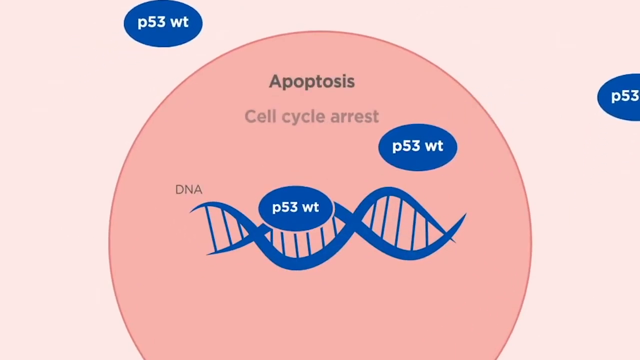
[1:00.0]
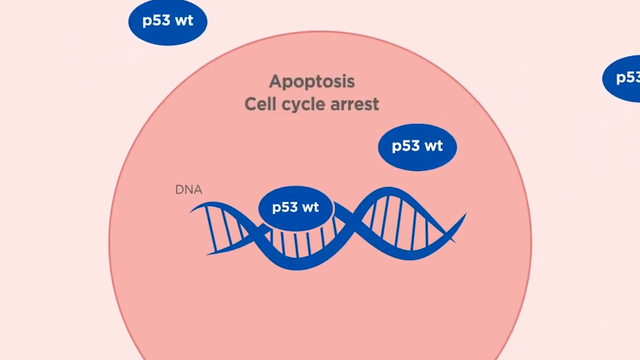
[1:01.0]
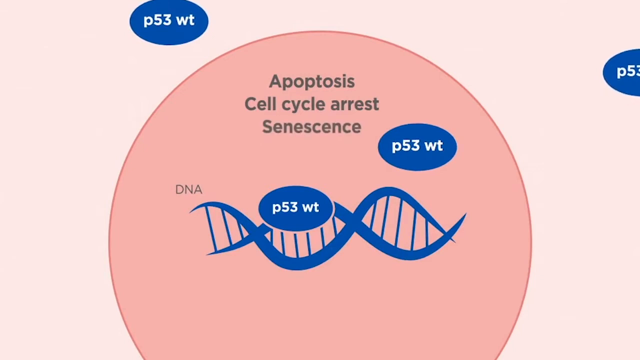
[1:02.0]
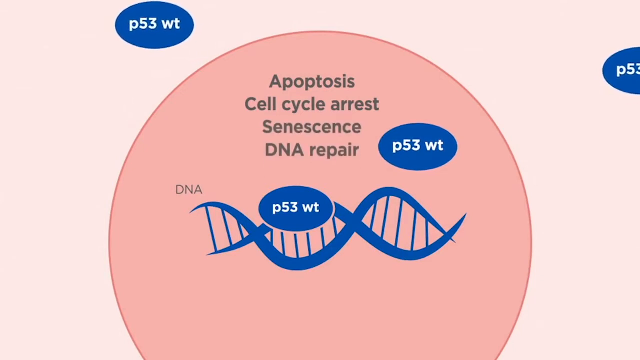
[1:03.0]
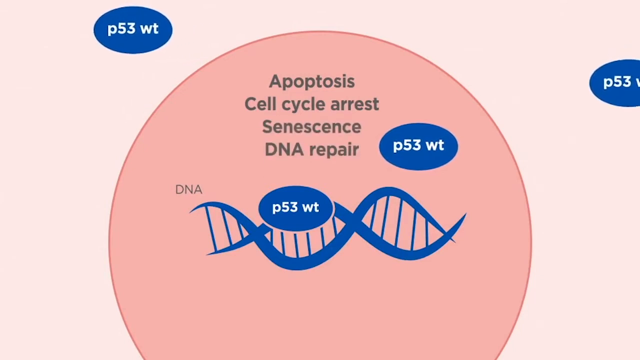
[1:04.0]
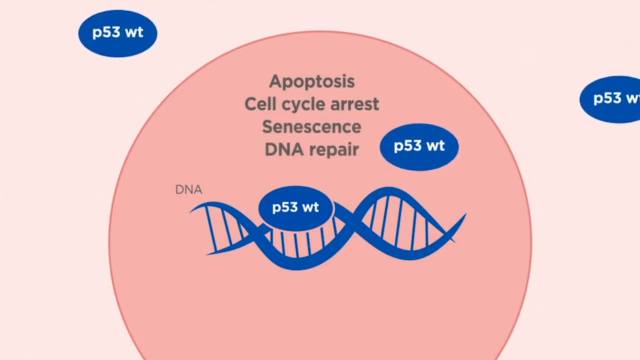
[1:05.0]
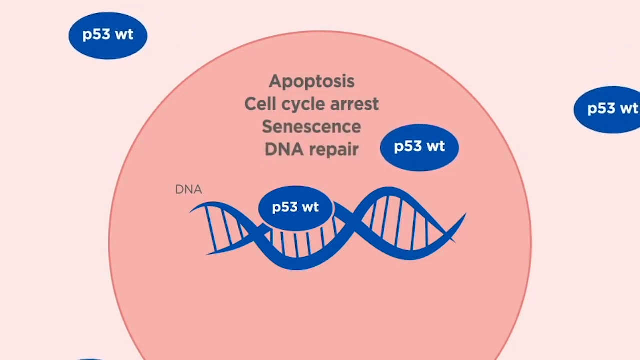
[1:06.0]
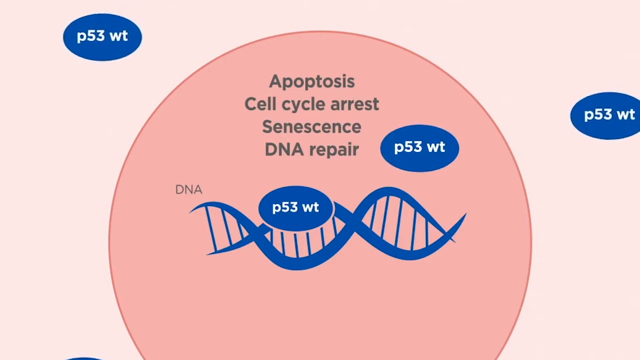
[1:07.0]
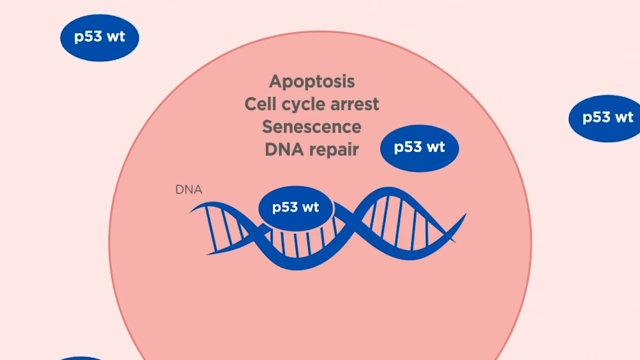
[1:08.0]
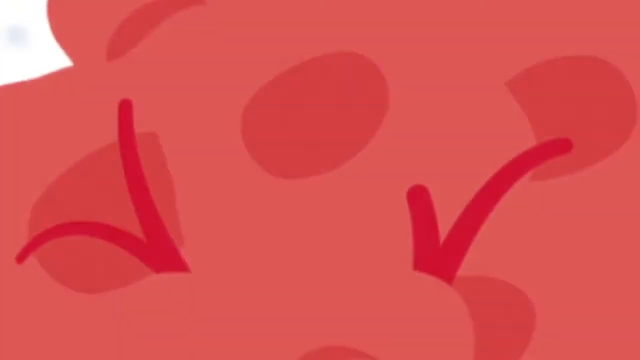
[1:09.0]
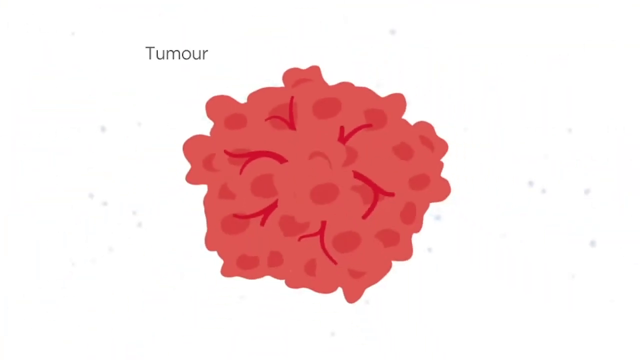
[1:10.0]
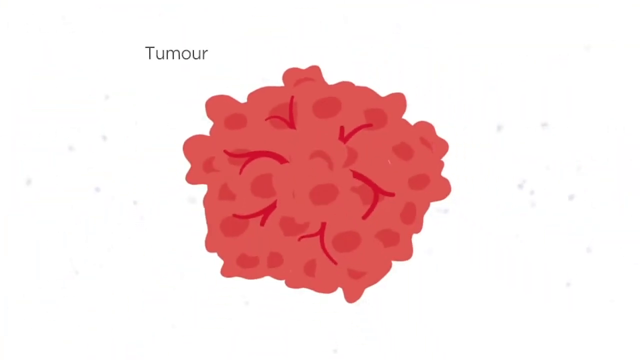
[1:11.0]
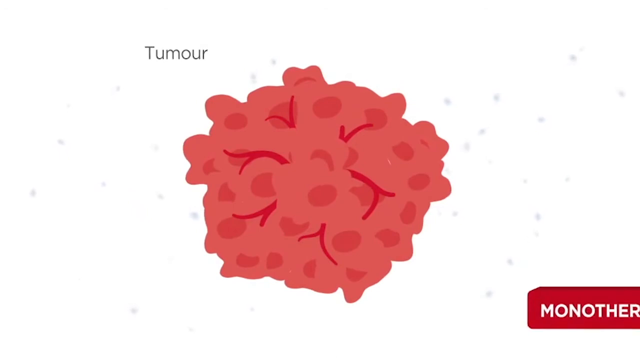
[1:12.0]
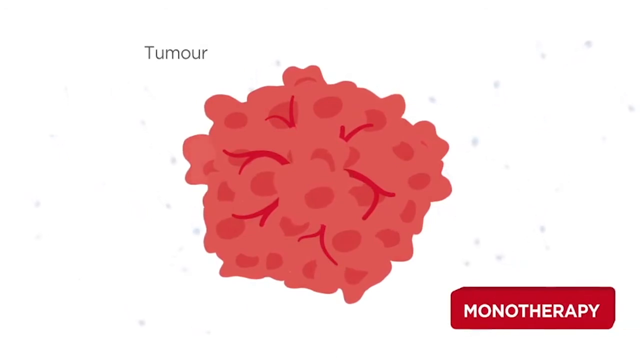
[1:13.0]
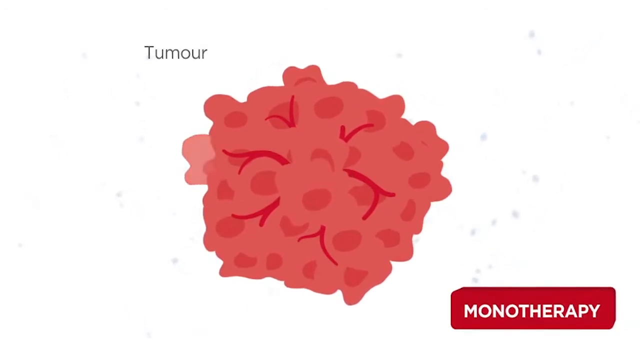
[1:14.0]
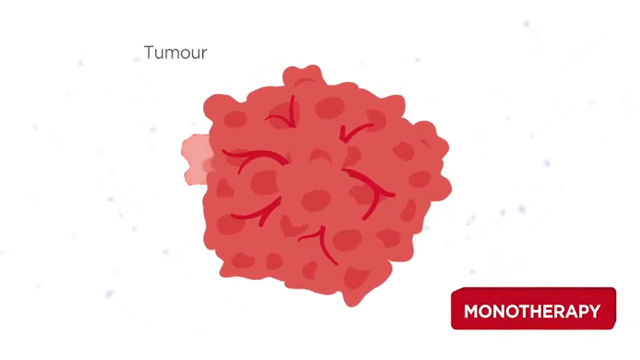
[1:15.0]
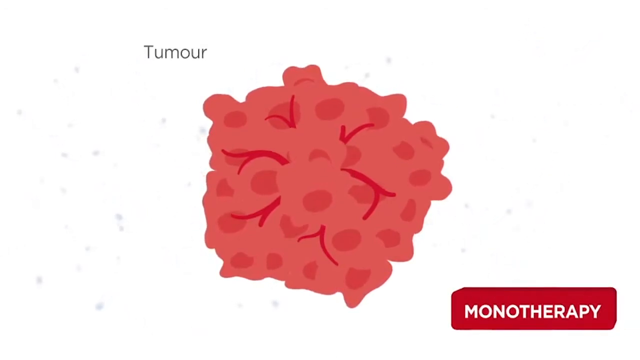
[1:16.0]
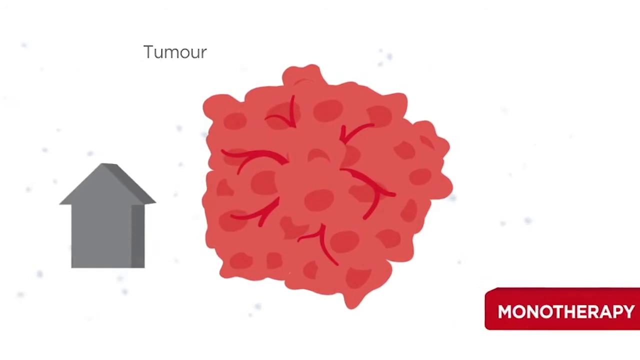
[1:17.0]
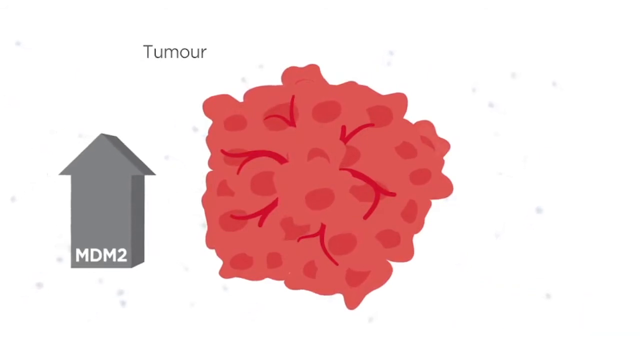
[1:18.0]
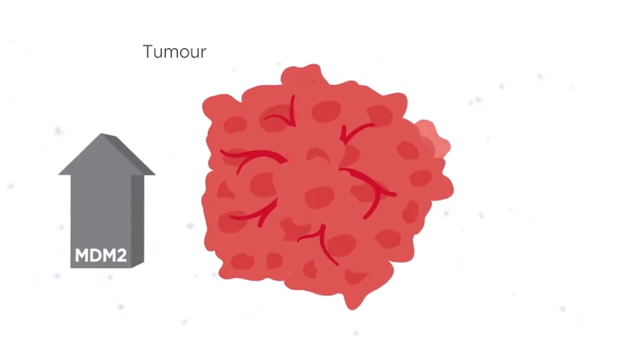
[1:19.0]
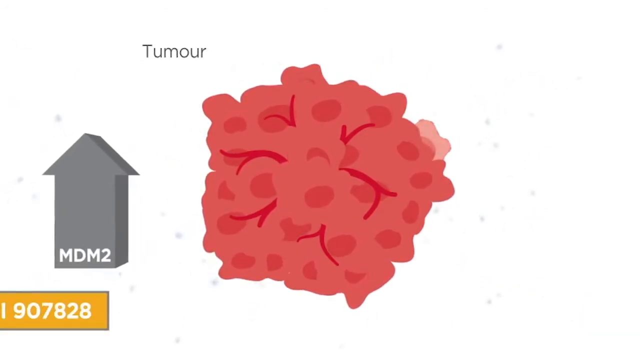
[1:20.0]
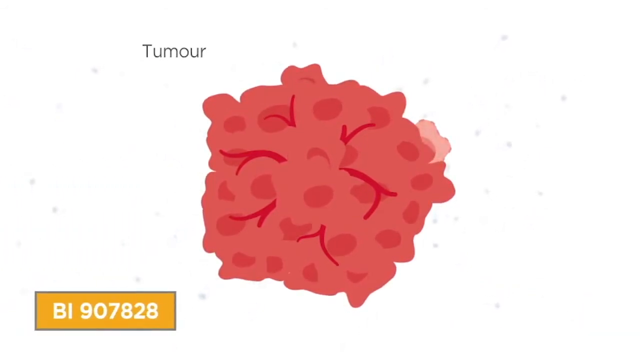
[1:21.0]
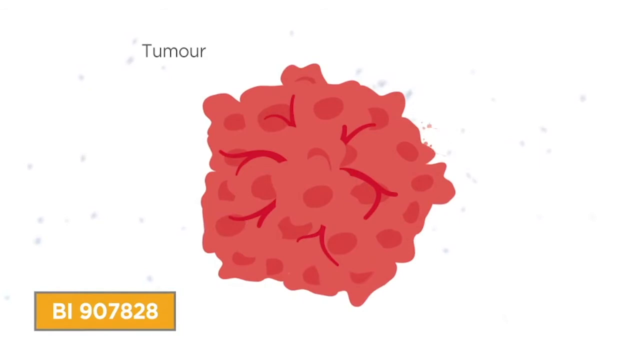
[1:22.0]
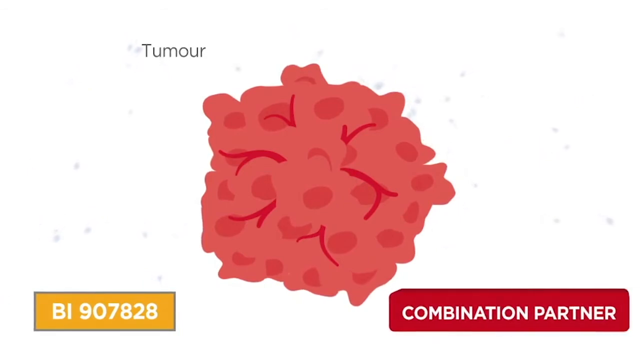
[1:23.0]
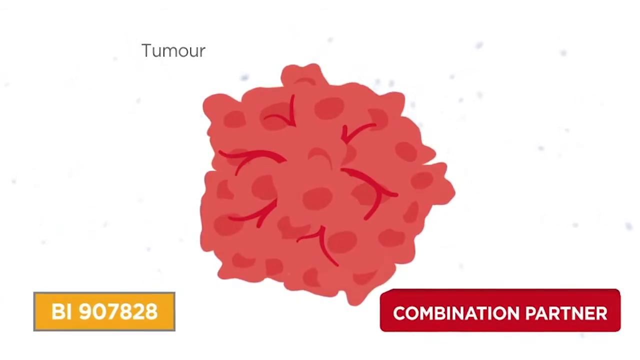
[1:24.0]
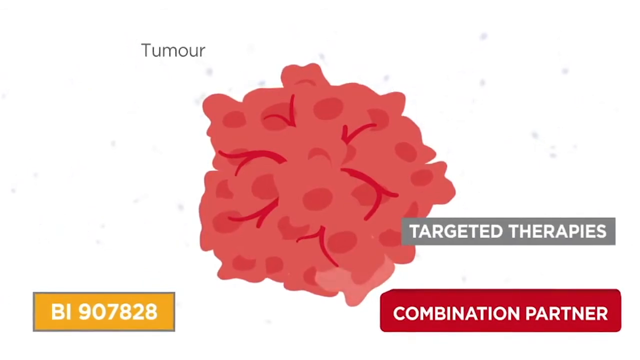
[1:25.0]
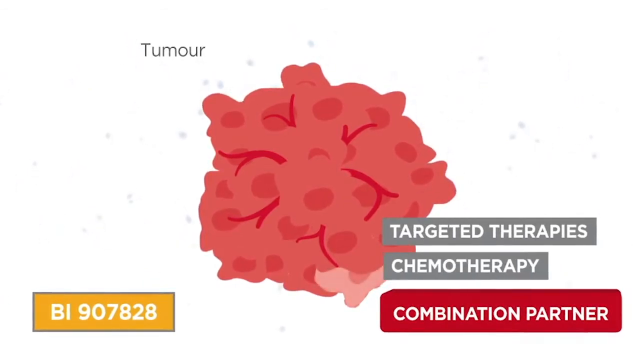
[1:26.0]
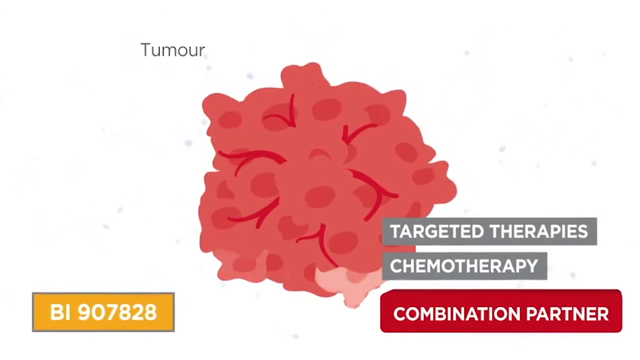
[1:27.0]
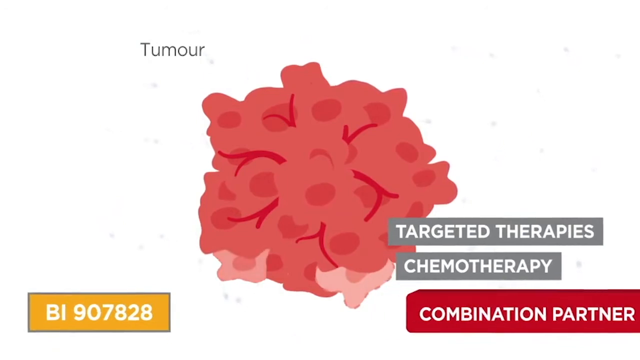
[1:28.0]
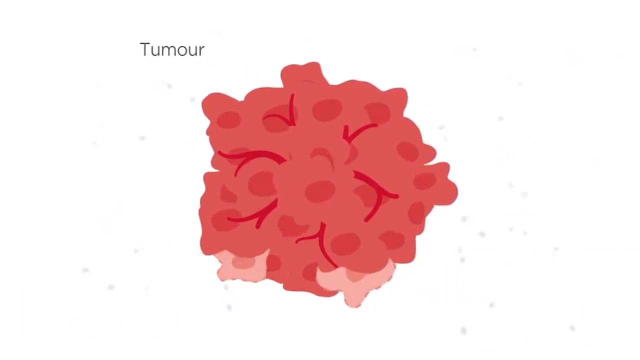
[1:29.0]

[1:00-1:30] A cell diagram shows the text "apoptosis cell cycle arrest" along with "DNA repair". A large cell appears with smaller blue cells going around it. The word "monotherapy" is on the screen. A picture of the cancerous tumor has a labeled arrow, and there is a labeled orange box, apparently as a combination partner, along with two gray rectangles that go into the middle. They all seem to meet in the middle, and then the gray ones and the red one on the right back up and disappear while the other cells float around. The blue cells constantly float around the larger pink cell. Genes are shown in the middle, labeled "DNA", interchanging as wavy lines that cross in the middle with lines coming down like a ladder.